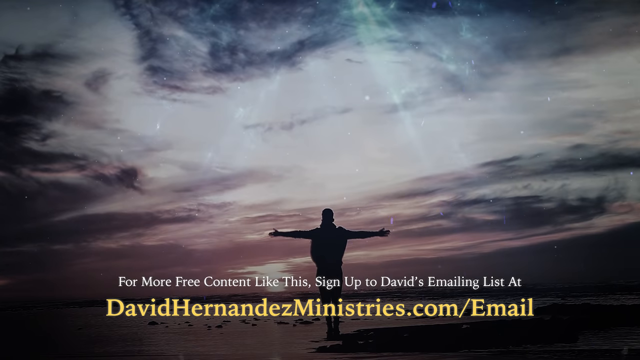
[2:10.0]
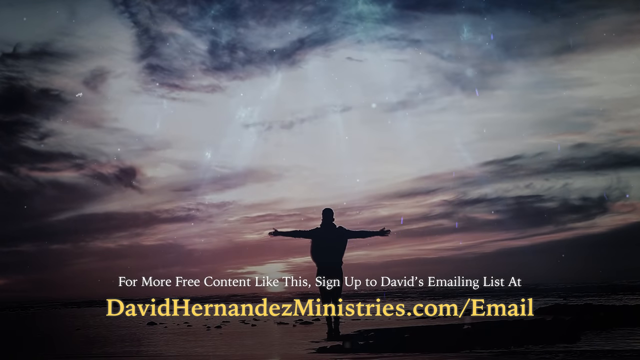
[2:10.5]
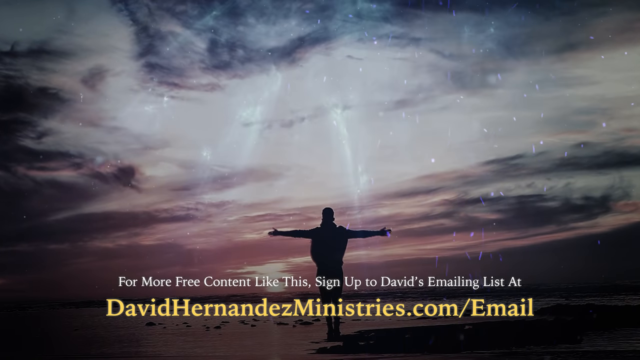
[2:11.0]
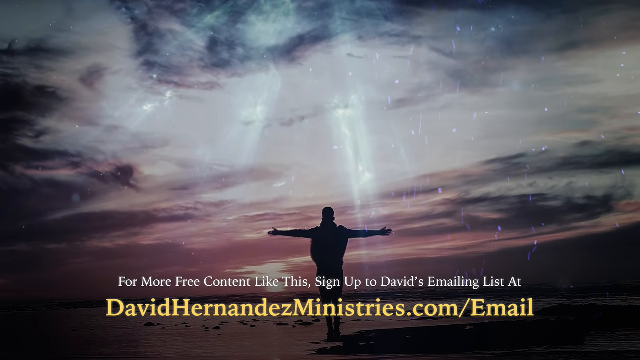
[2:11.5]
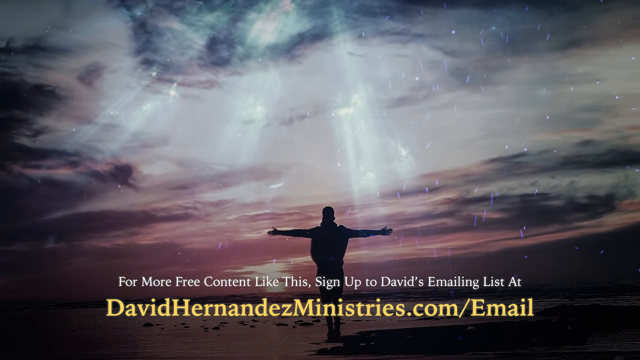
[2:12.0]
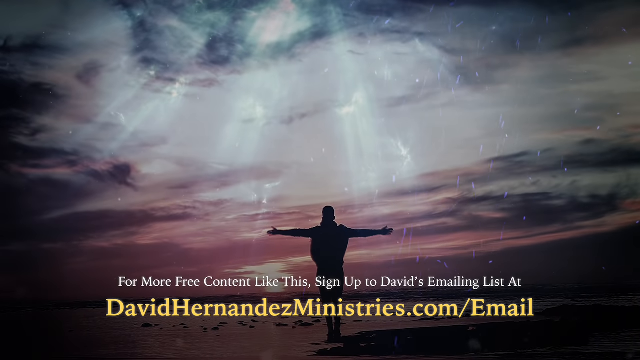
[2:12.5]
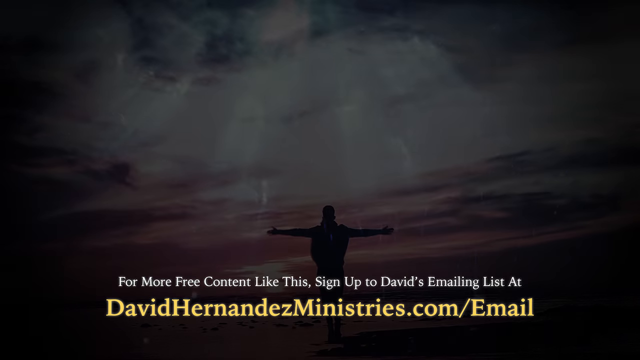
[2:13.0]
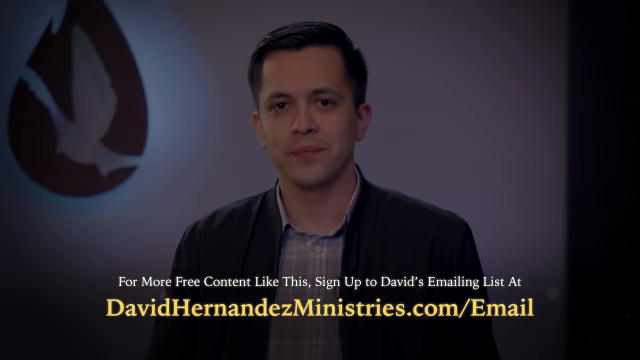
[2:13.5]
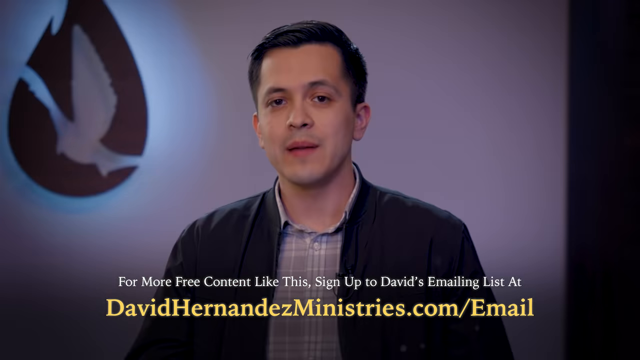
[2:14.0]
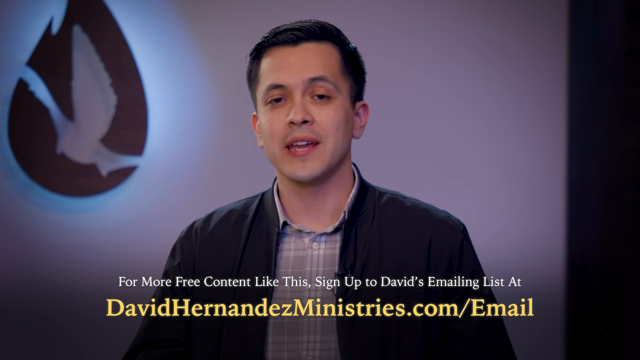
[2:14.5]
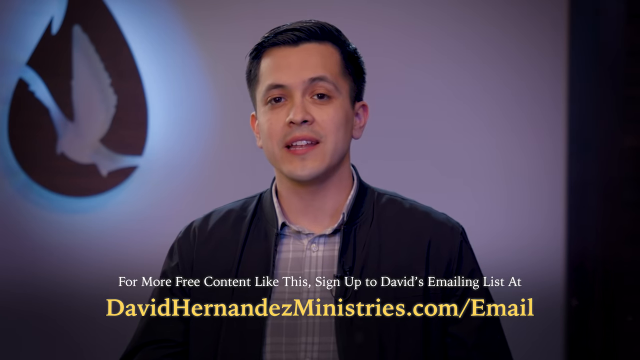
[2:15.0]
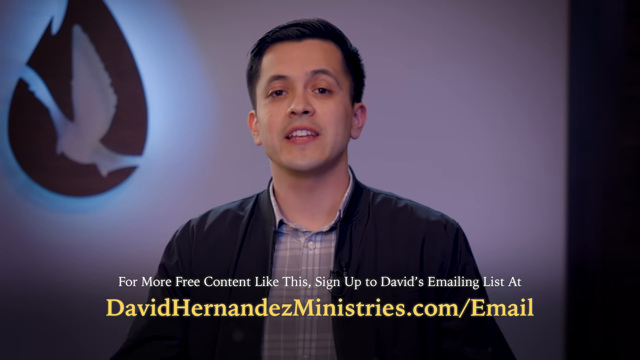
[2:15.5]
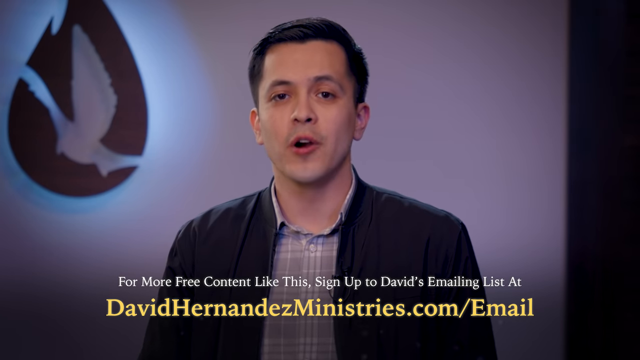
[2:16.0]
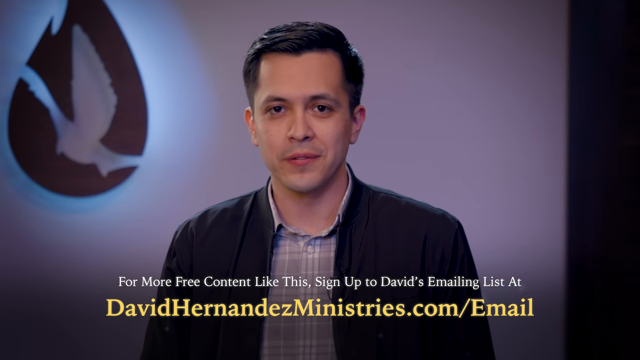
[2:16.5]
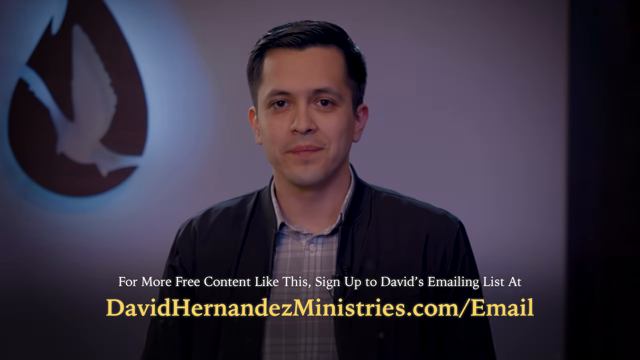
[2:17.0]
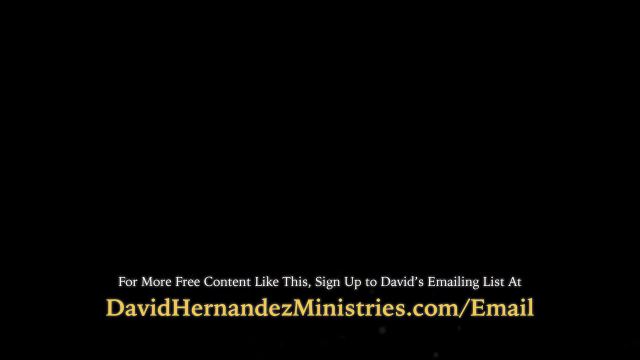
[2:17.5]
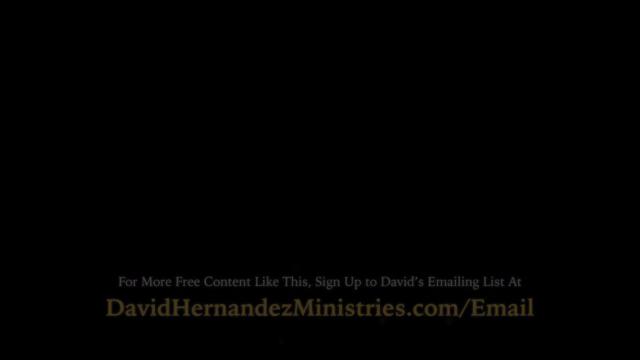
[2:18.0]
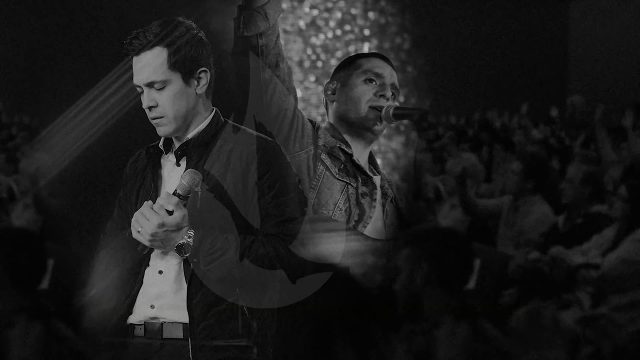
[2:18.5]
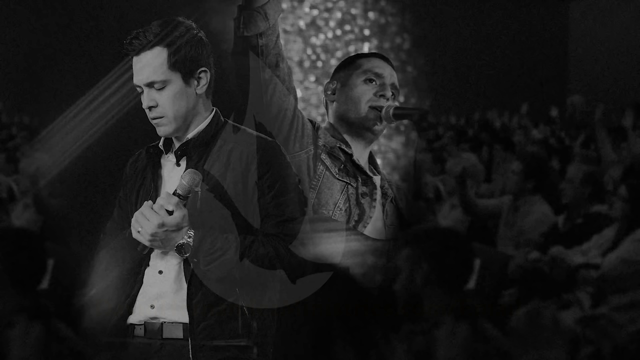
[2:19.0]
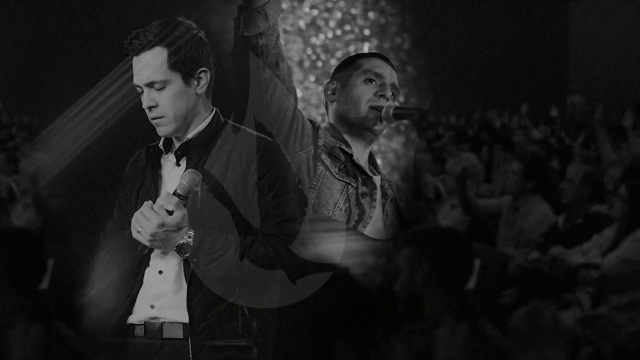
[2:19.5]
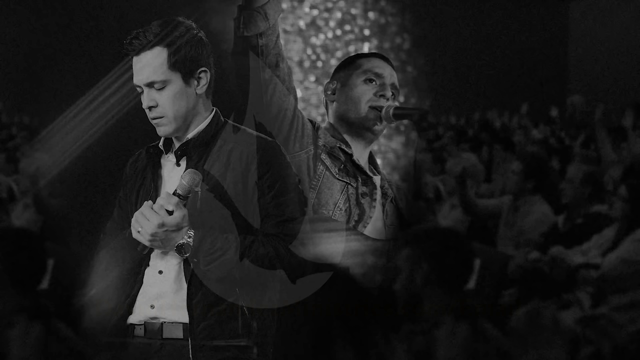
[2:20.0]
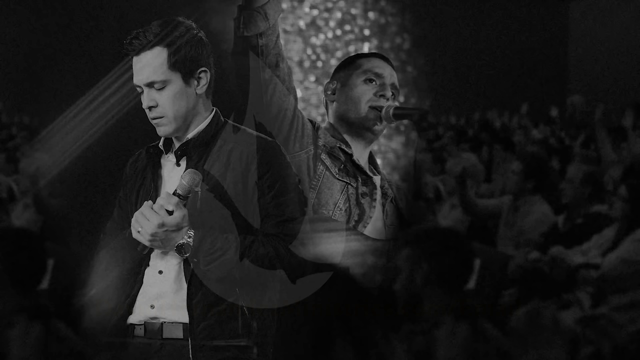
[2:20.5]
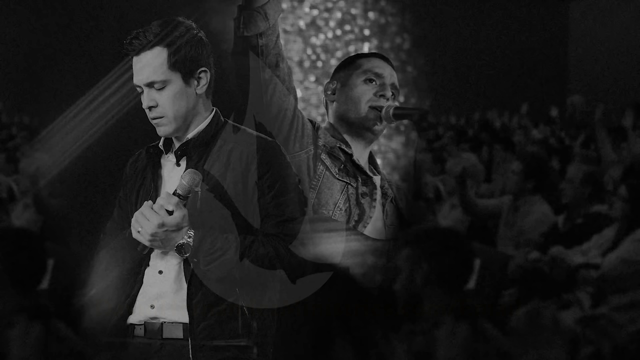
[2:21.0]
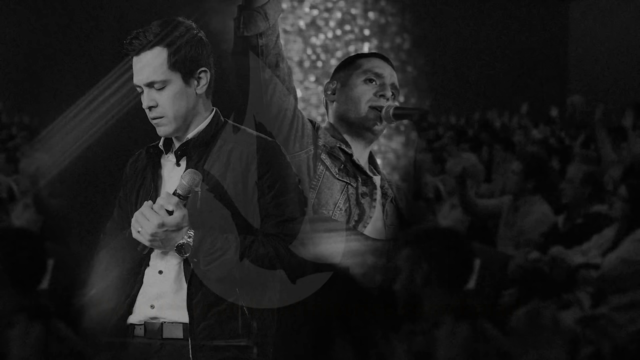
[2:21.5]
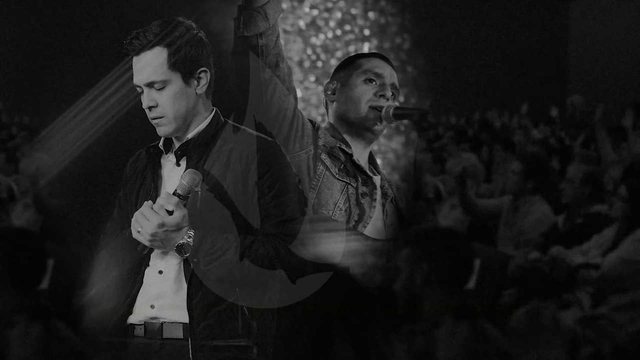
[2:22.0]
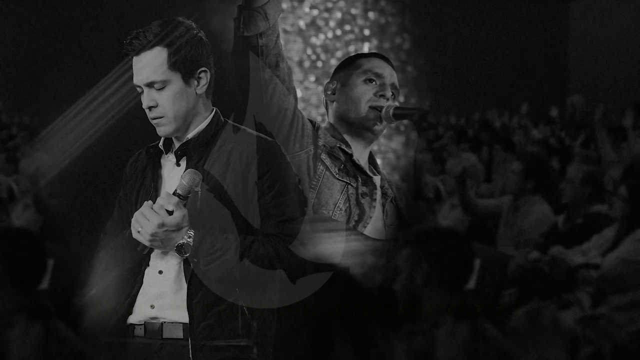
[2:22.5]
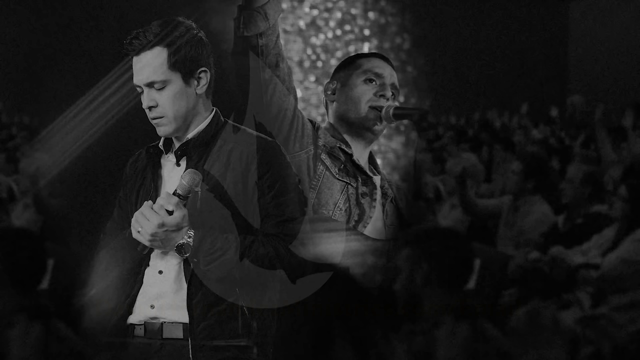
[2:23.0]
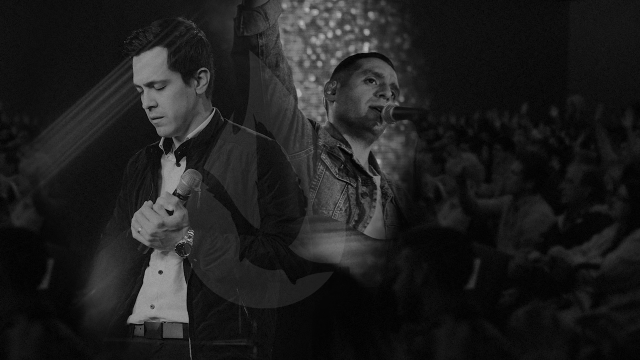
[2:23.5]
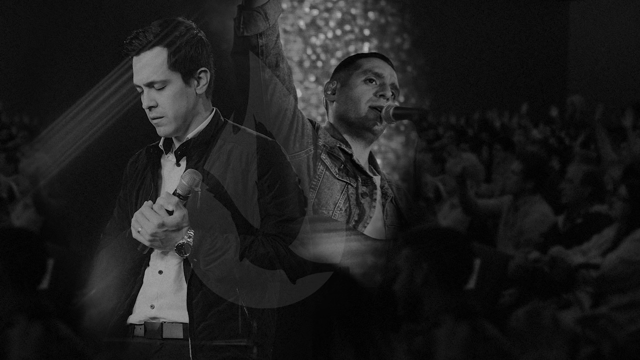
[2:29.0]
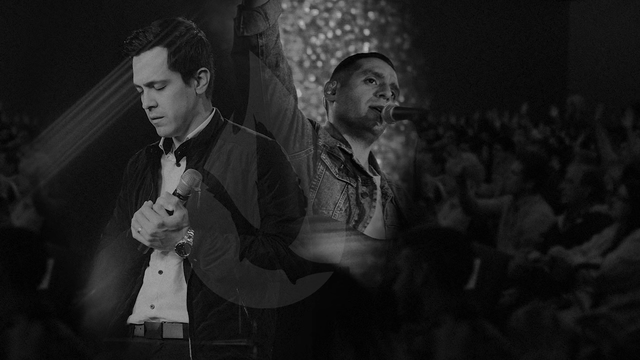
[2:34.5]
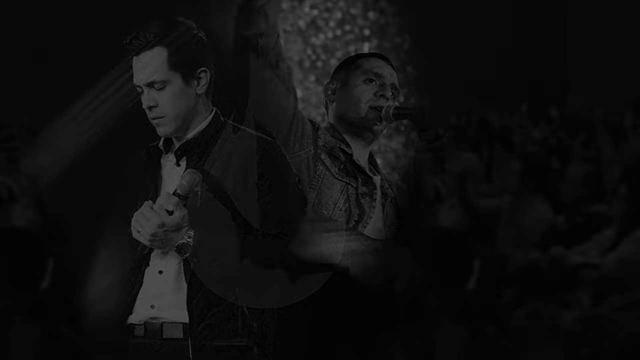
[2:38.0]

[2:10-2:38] An image shows a man with his arms outstretched at the bottom of the frame, with the rest of the frame occupied by a sky covered by clouds. At the bottom of the screen there is text, partly white and partly yellow. A man is then framed in the center of the screen, wearing a dark jacket and a light shirt, with short dark hair. On the white wall behind him, on the left, there is an irregularly shaped dark logo. In the last part, a black-and-white image composed of various photos is presented. On the left, a man holds a microphone in his hand and looks down. In the central part, another person holds a microphone close to his lips, wears a jean jacket and has one arm up. On the right, several people are sitting on chairs.